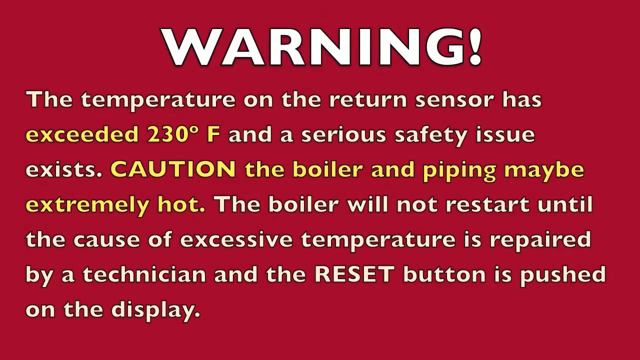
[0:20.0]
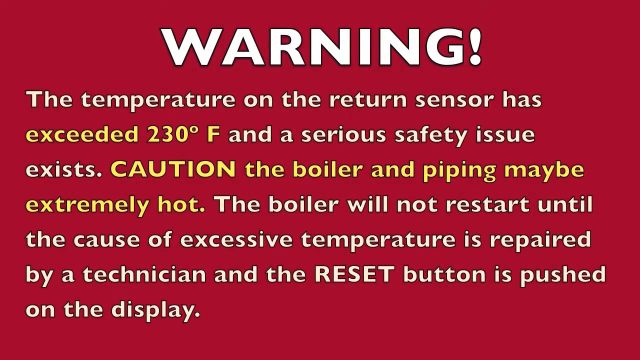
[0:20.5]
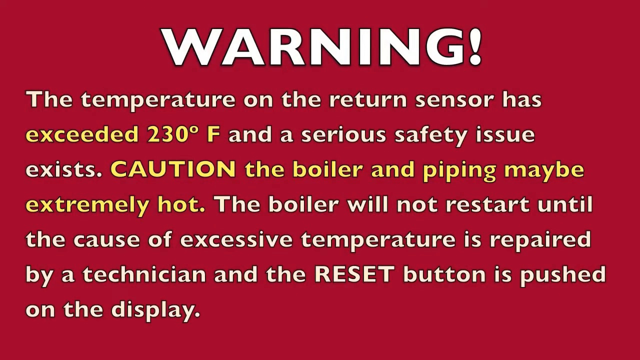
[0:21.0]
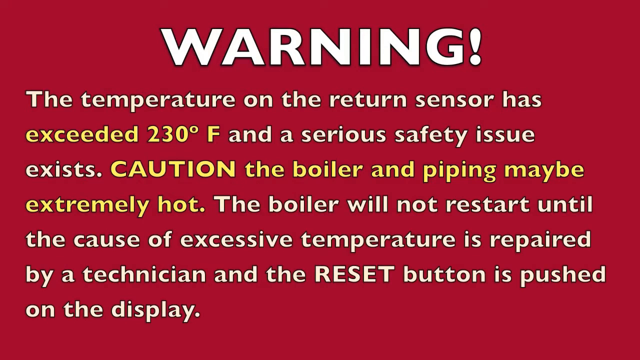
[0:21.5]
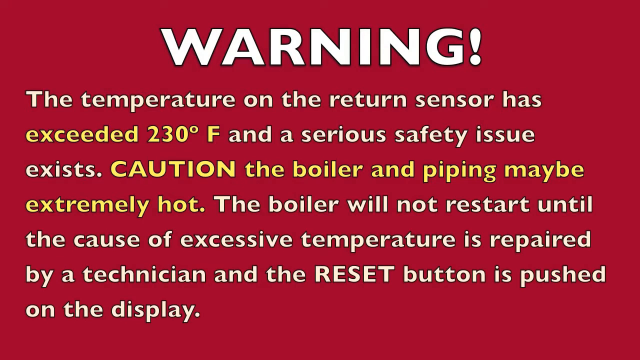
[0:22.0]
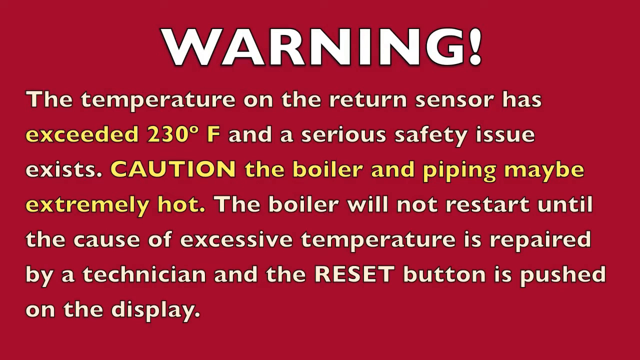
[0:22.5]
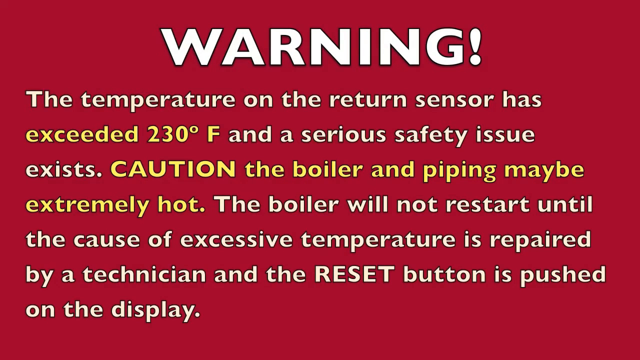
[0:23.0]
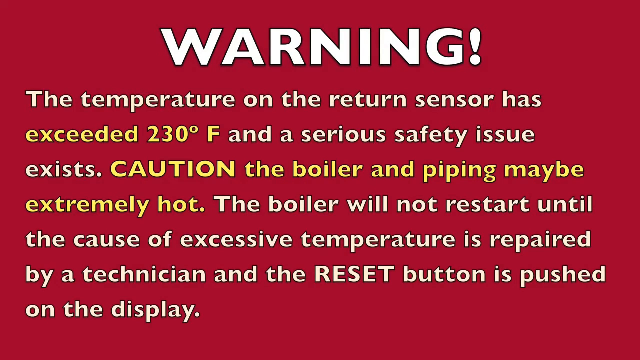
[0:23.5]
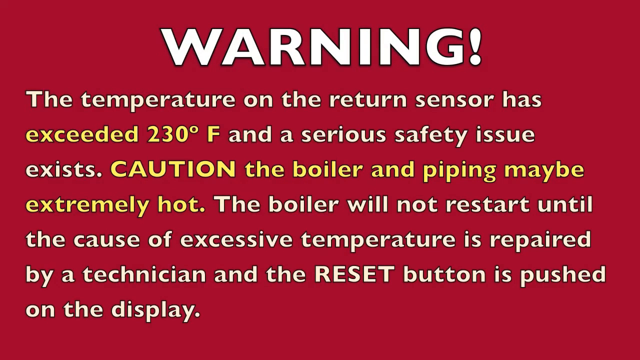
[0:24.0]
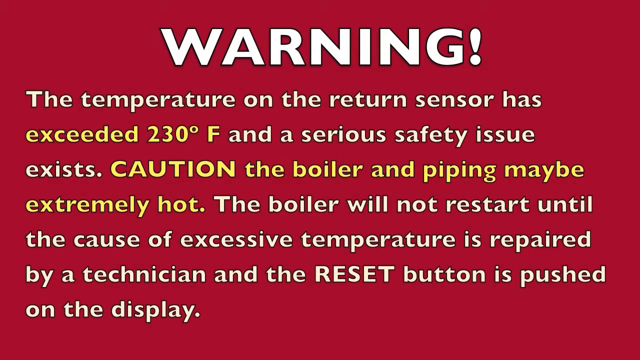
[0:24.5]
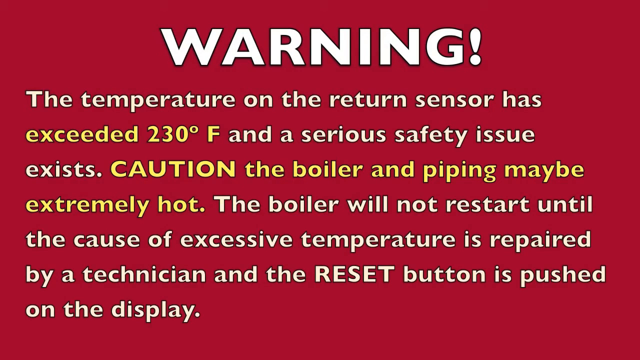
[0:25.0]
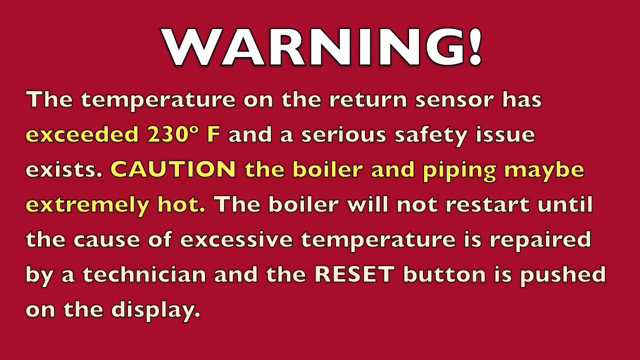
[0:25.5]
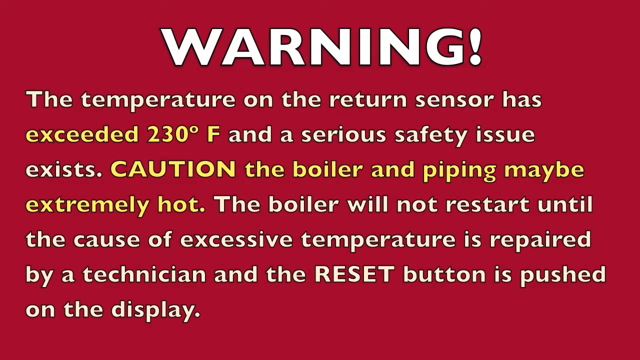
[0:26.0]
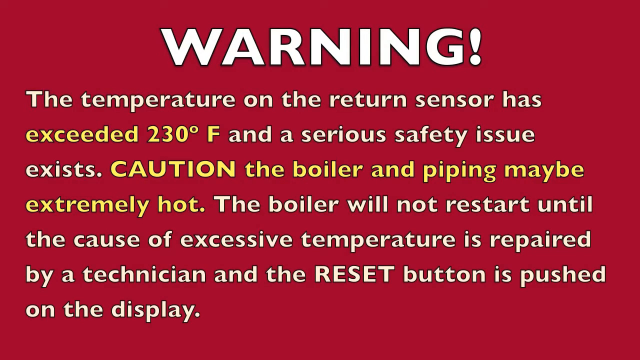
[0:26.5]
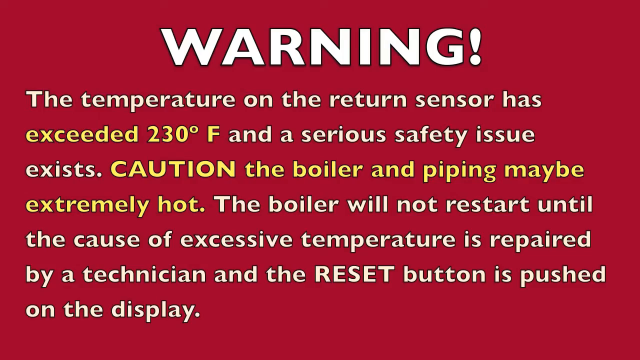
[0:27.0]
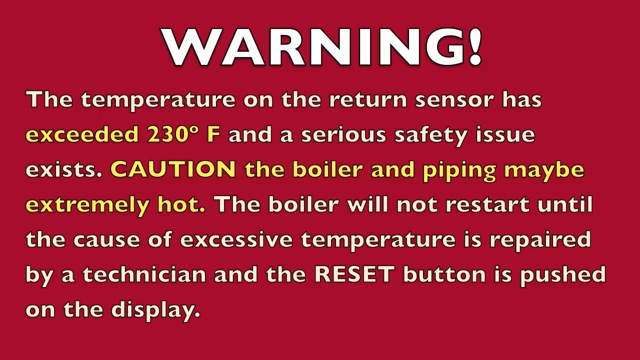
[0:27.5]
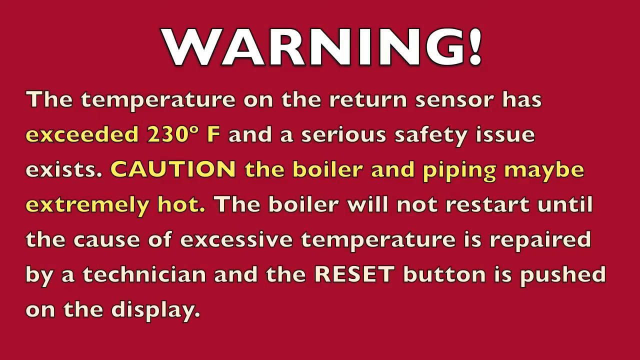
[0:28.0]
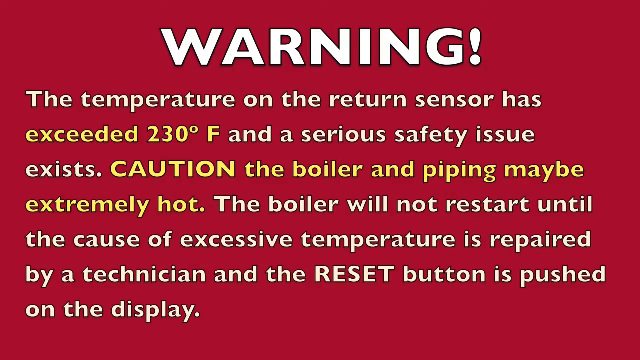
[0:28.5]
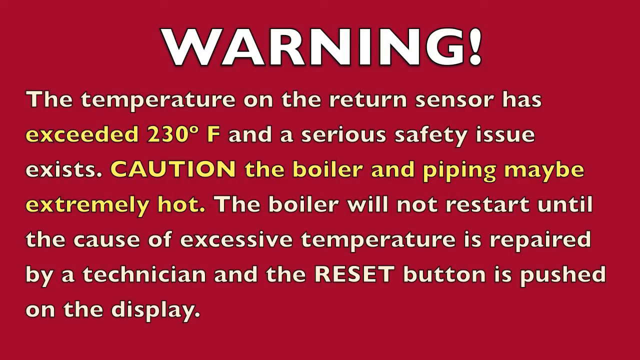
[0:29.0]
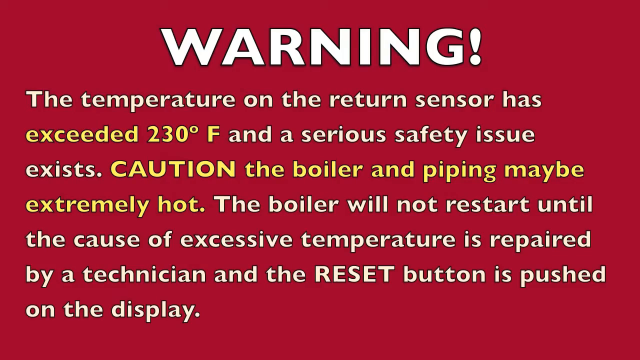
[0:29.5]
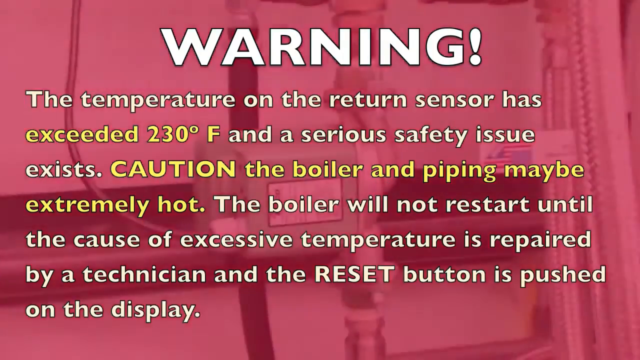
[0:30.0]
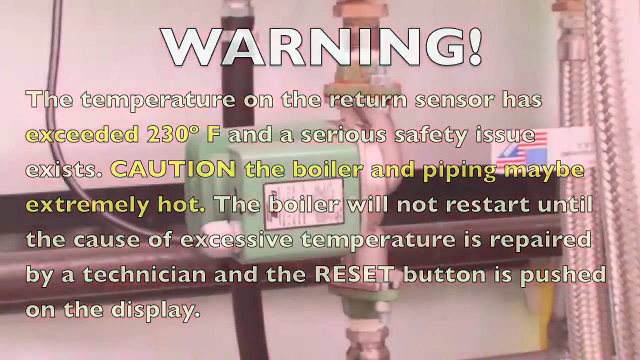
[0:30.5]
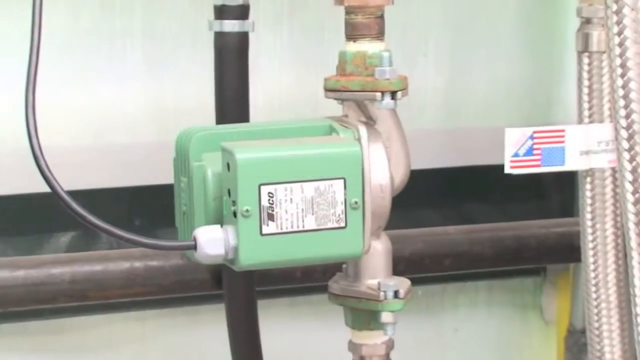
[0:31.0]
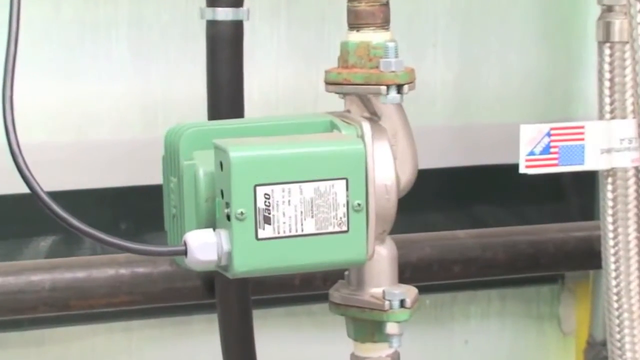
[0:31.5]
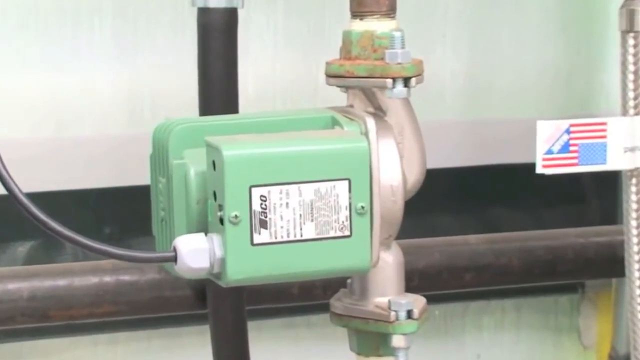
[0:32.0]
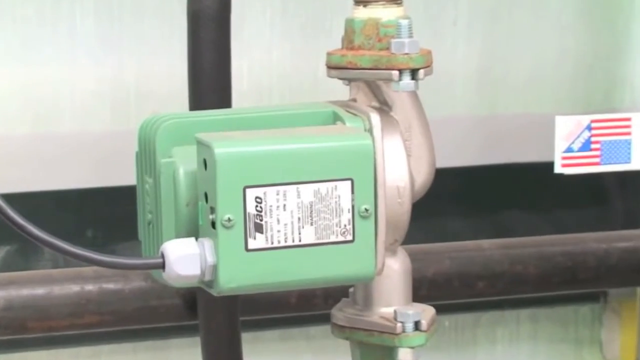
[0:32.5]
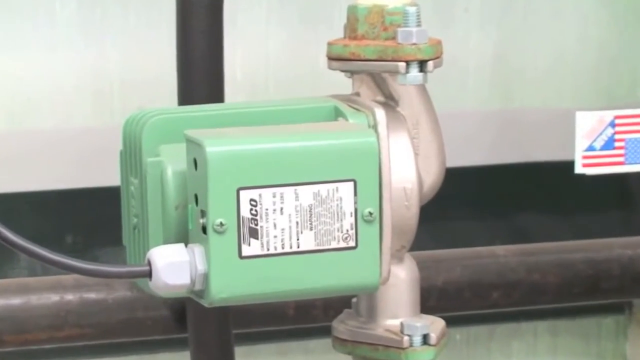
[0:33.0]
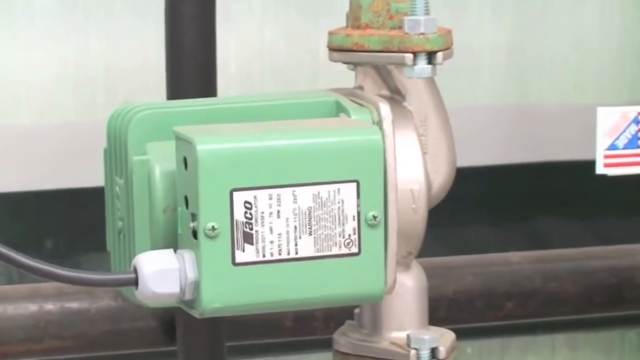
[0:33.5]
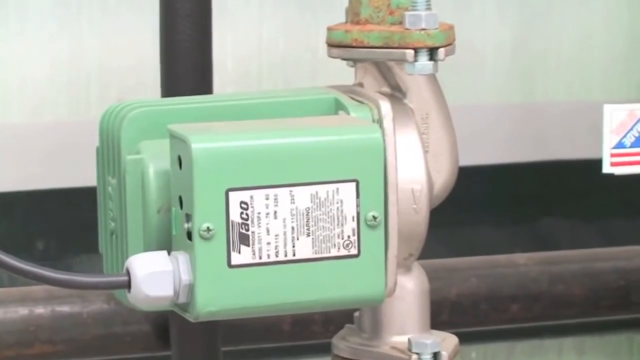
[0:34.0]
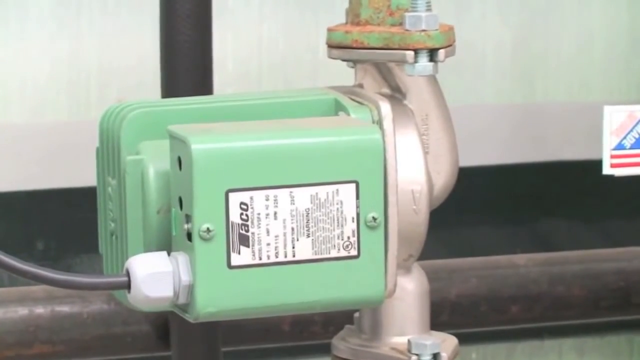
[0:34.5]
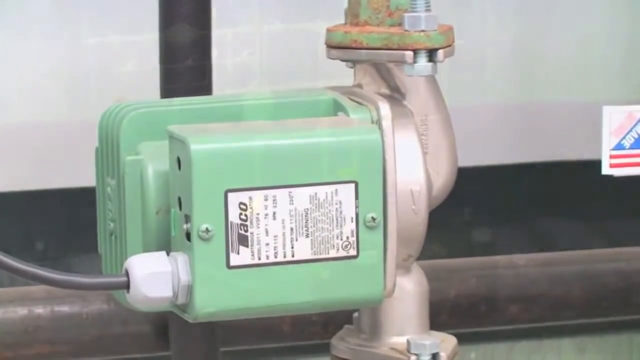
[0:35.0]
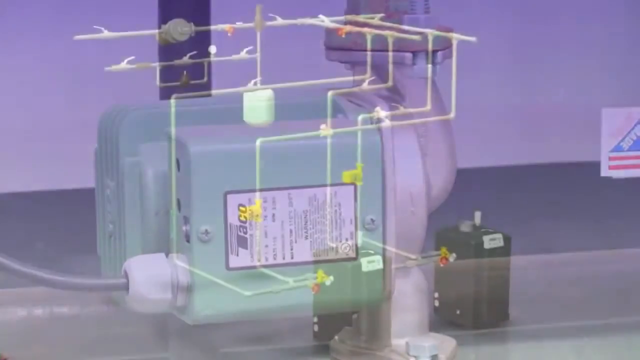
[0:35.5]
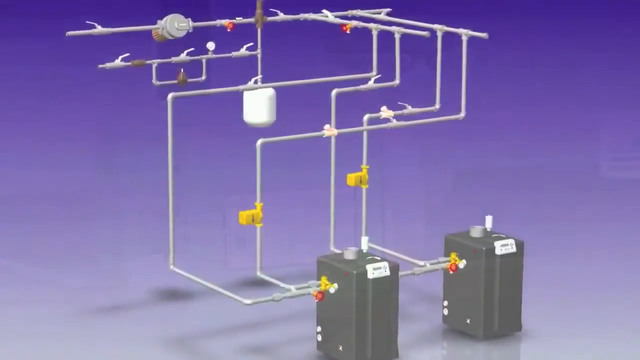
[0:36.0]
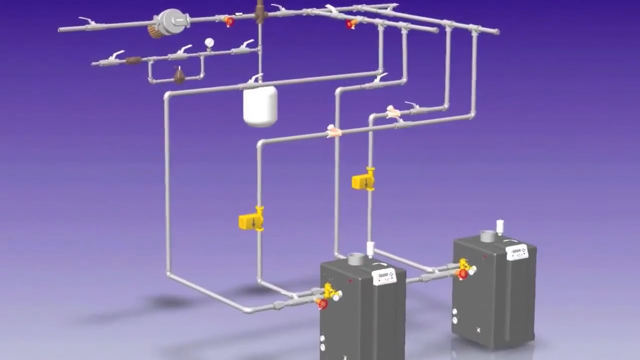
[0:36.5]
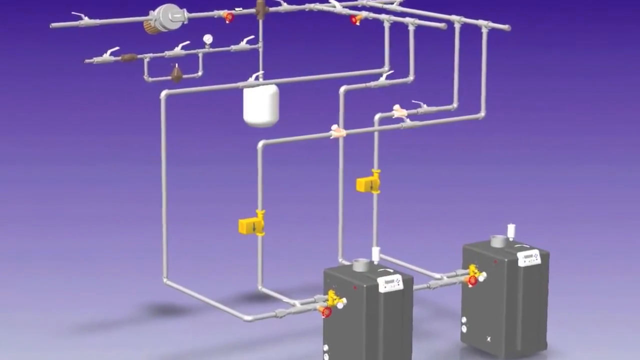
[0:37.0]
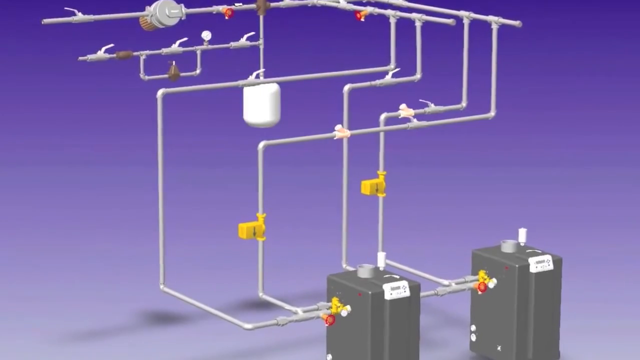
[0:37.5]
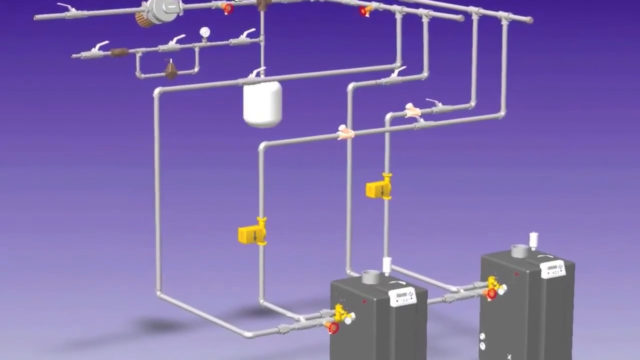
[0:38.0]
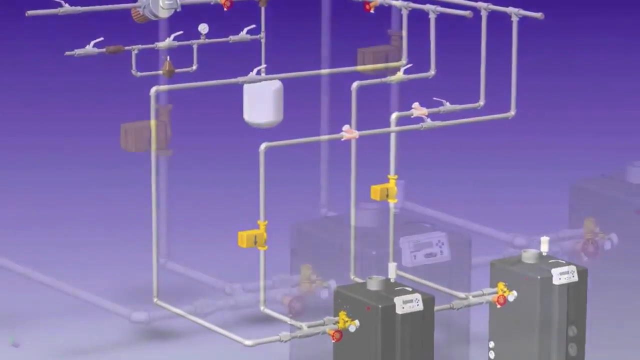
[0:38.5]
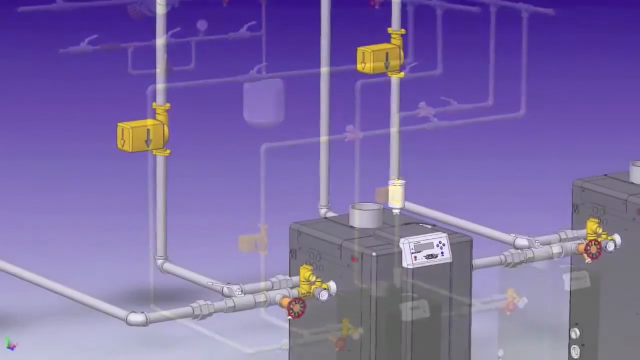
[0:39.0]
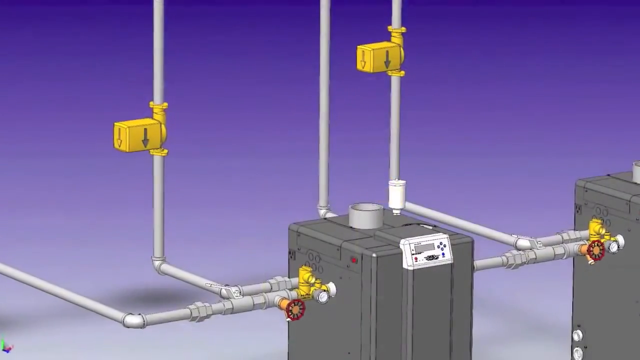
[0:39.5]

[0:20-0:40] The warning screen says "WARNING" at the top in all caps with an exclamation point, and beneath it: "the temperature on the return sensor has exceeded 230 degrees Fahrenheit and a serious safety issue exists. Caution, the boiler and piping may be extremely hot. The boiler will not restart until the cause of excessive temperature is repaired by a technician and the reset button is pushed on the display." It stays on screen for quite a while before fading into a kind of mint green box in the center of the screen, with a black pipe running perpendicular to it behind it and another parallel black pipe underneath that. The video zooms in on the box, showing "ACO" on it with a lot of other small text beneath. It then fades into a static image with a blue background showing two black boxes in the bottom right with many pipes connected to them. The pipes go up vertically for a bit, then over to the right, then back up, with what looks like several clips at the very top. The video zooms in on this and replaces it with a much closer image of the box on the left, with the box on the right kind of cut out of the image. Yellow boxes with down arrows on them are attached to the pipes.